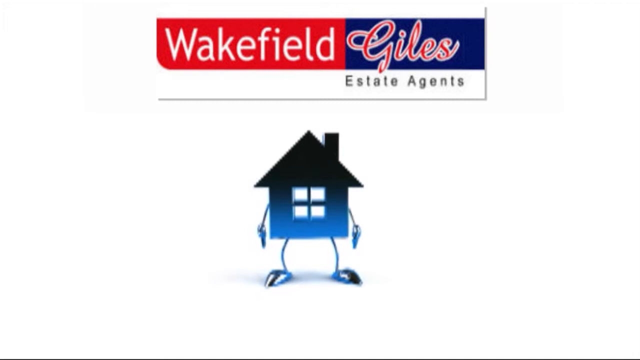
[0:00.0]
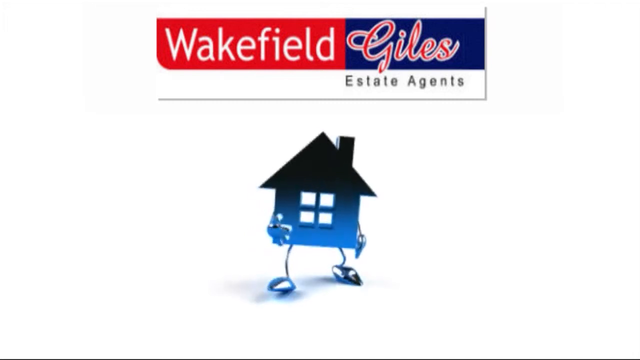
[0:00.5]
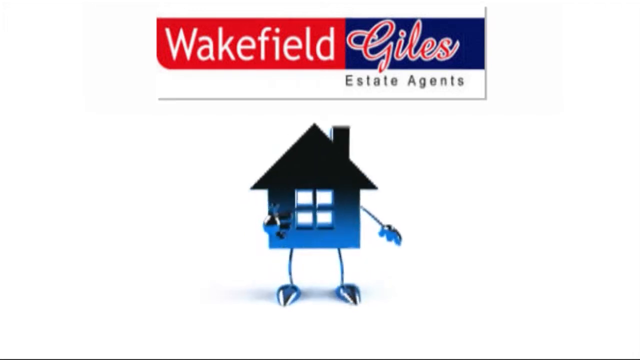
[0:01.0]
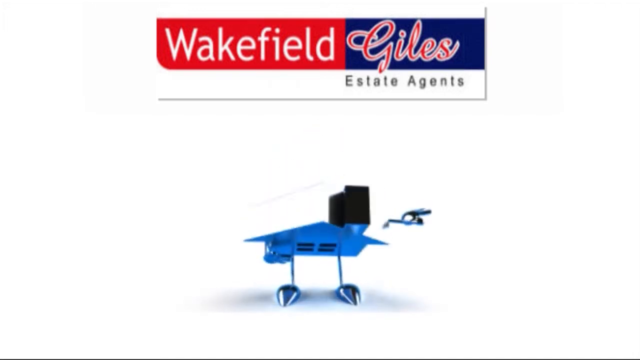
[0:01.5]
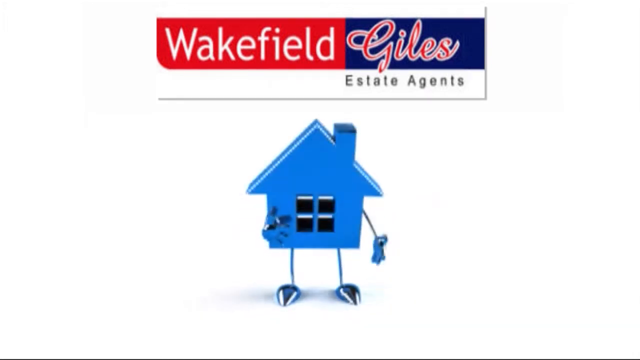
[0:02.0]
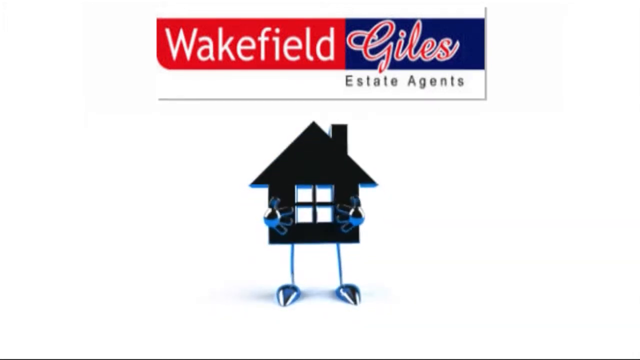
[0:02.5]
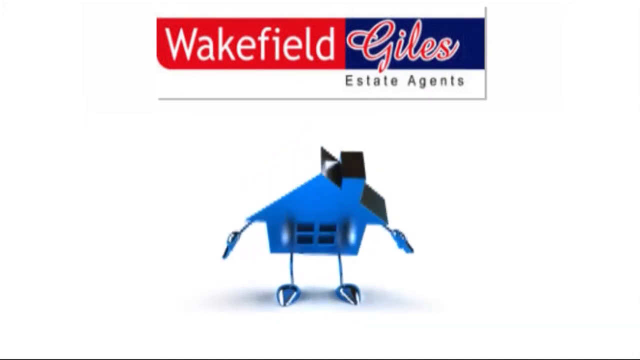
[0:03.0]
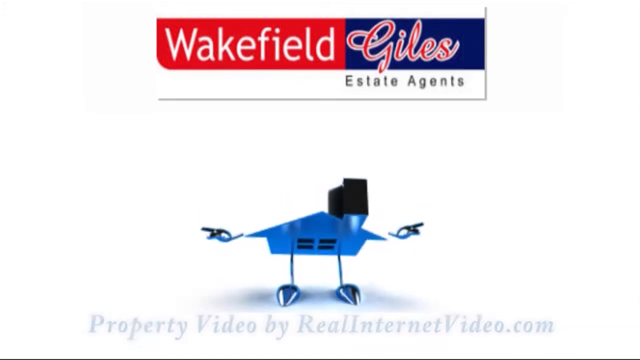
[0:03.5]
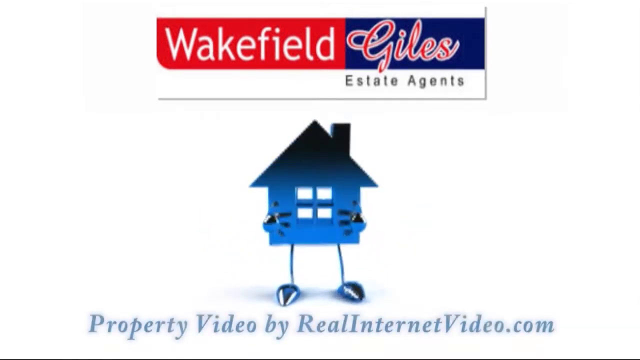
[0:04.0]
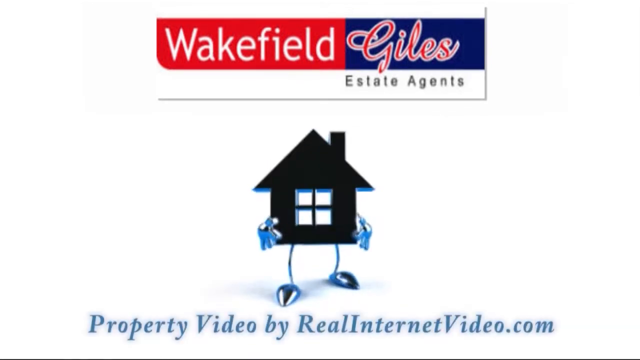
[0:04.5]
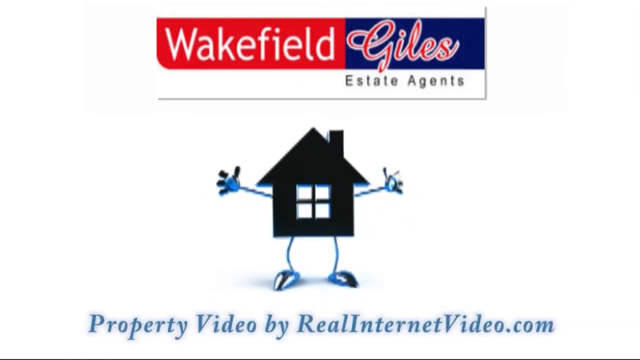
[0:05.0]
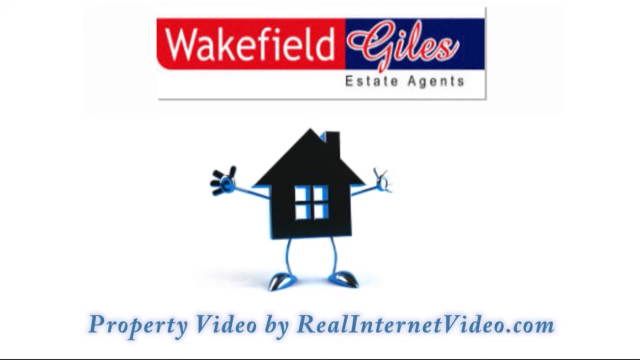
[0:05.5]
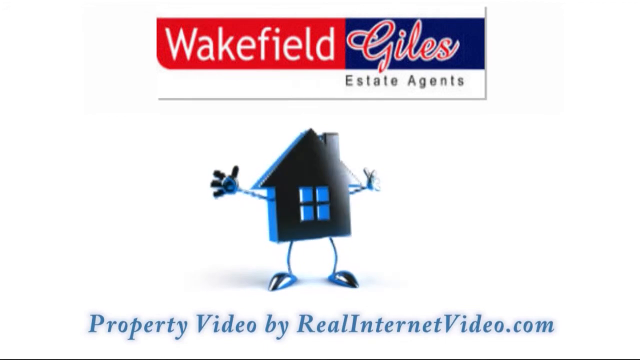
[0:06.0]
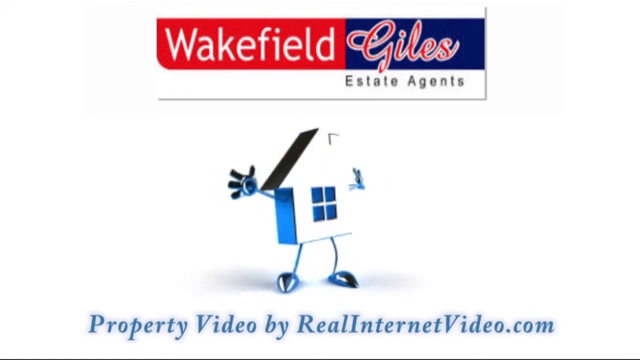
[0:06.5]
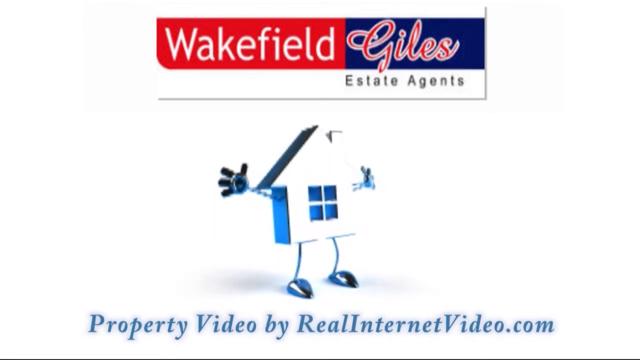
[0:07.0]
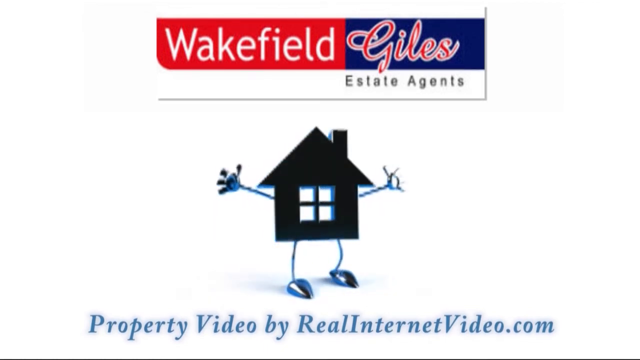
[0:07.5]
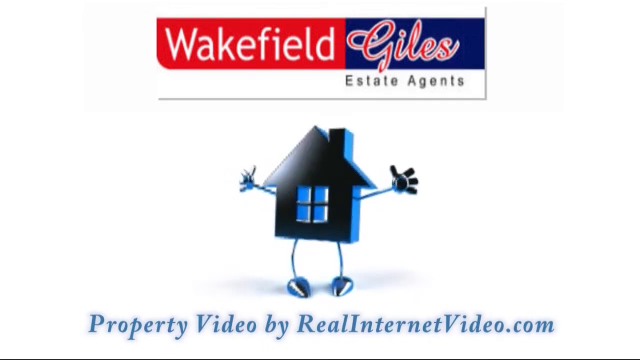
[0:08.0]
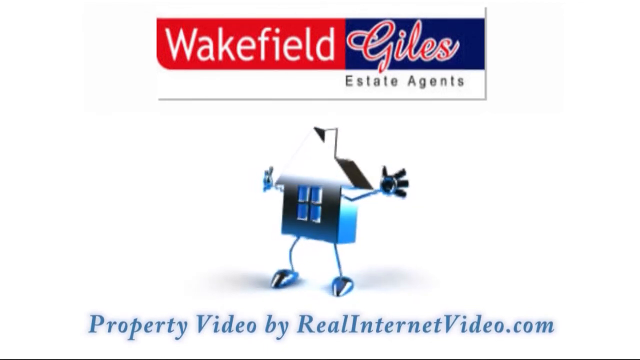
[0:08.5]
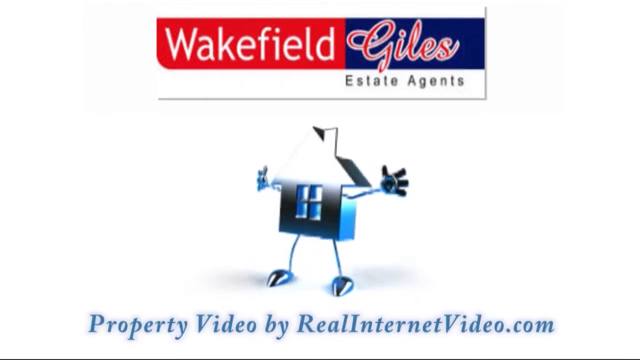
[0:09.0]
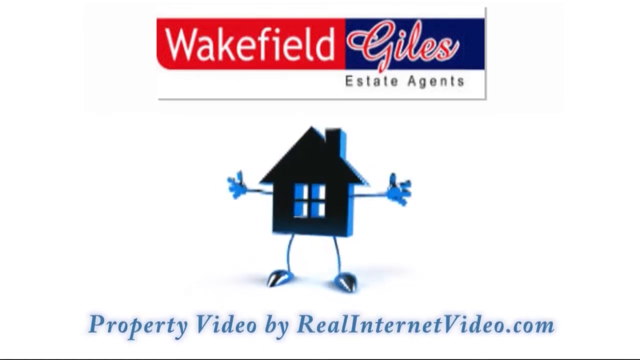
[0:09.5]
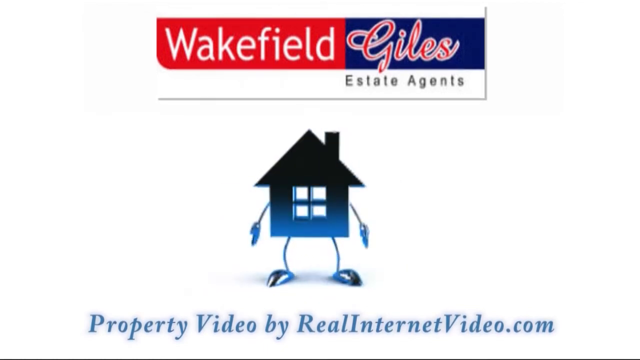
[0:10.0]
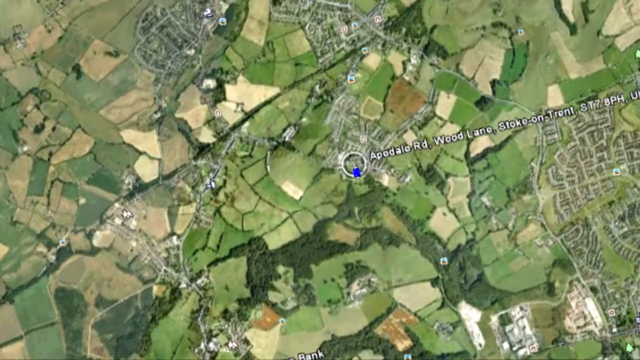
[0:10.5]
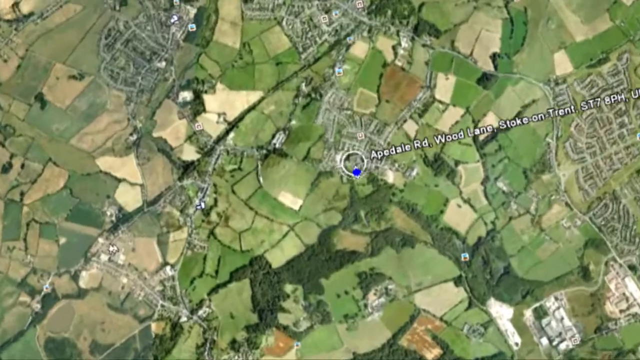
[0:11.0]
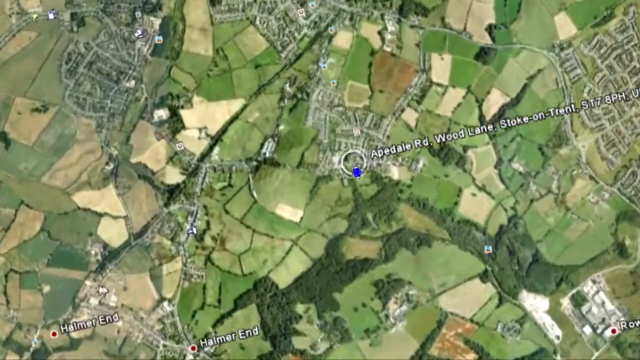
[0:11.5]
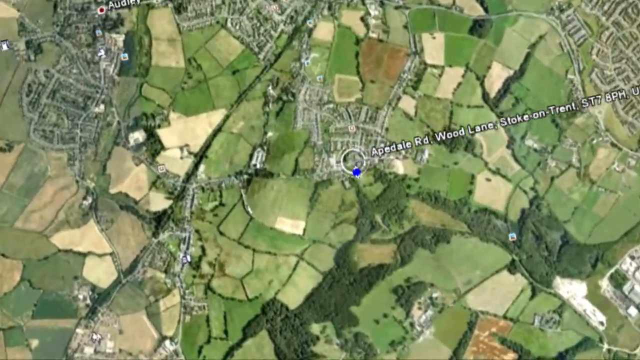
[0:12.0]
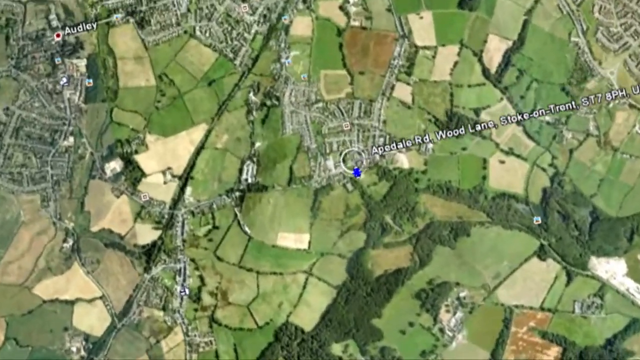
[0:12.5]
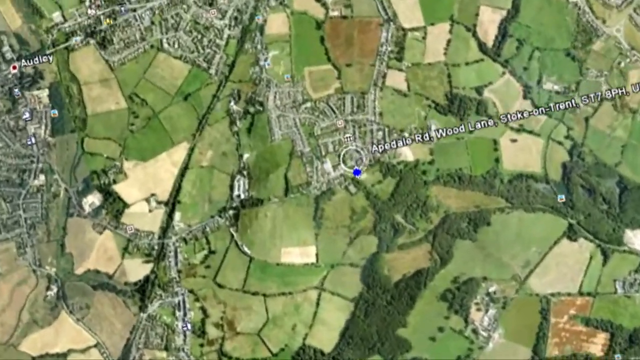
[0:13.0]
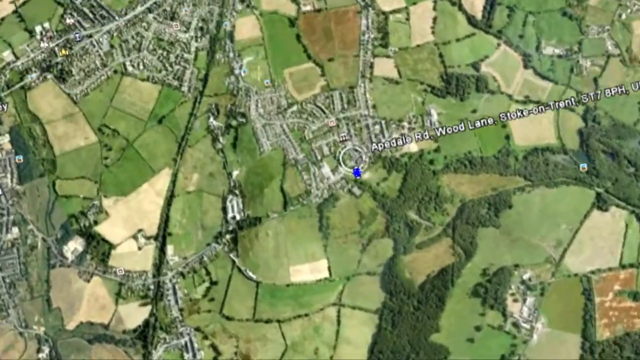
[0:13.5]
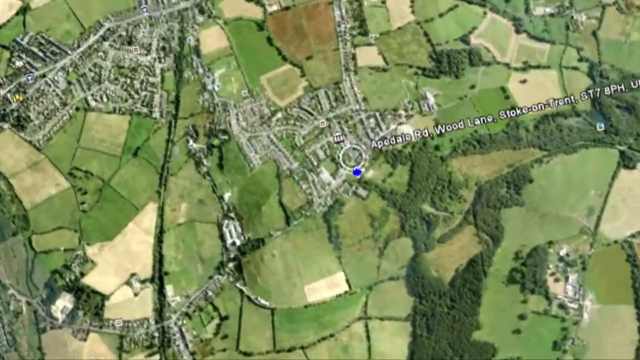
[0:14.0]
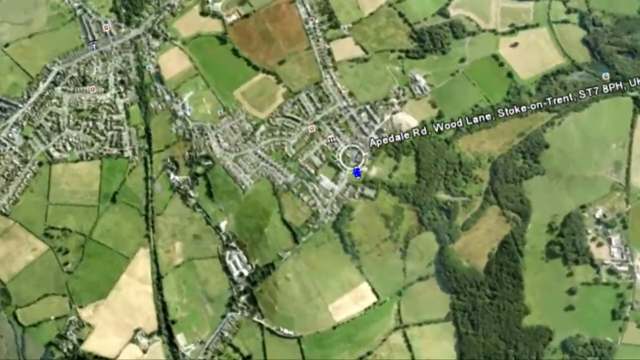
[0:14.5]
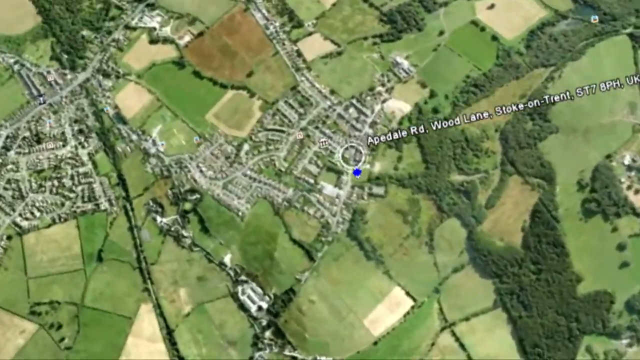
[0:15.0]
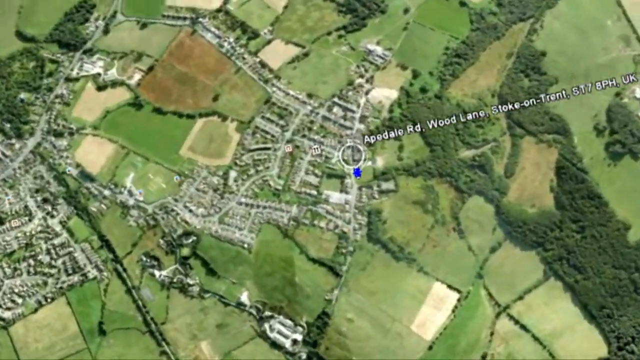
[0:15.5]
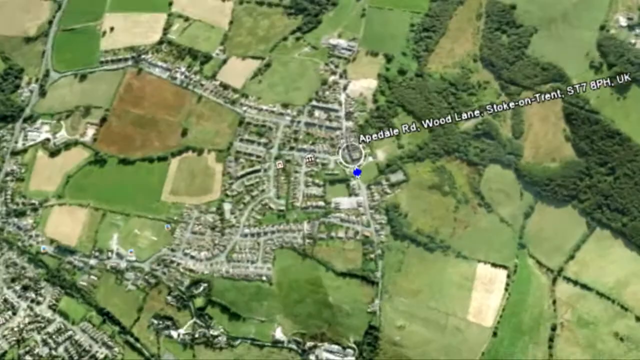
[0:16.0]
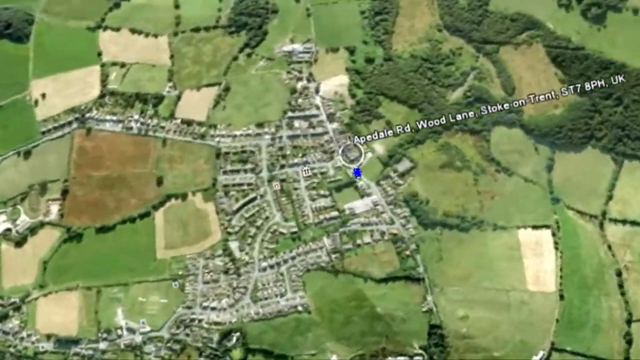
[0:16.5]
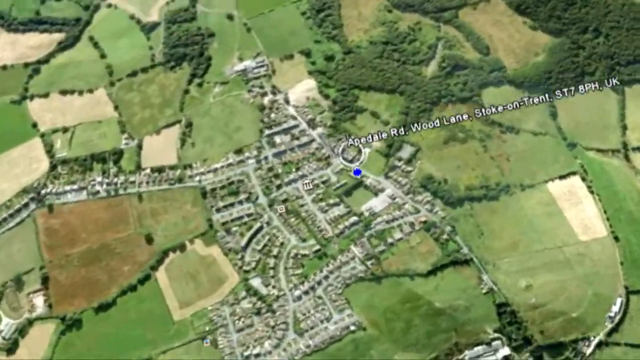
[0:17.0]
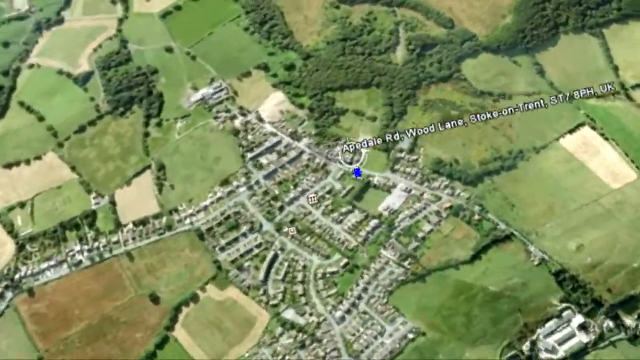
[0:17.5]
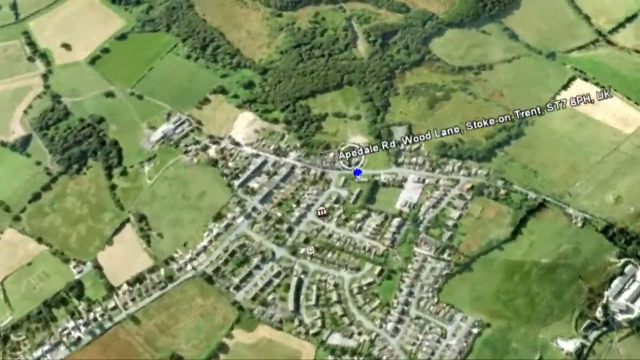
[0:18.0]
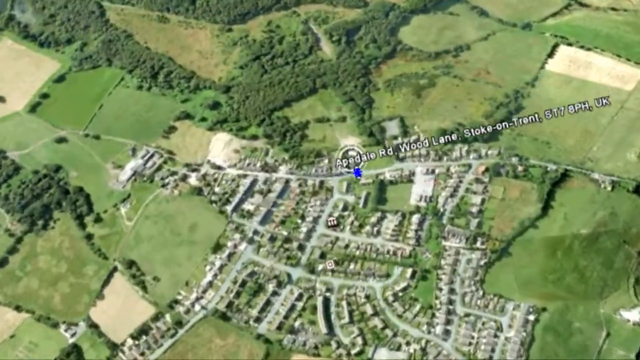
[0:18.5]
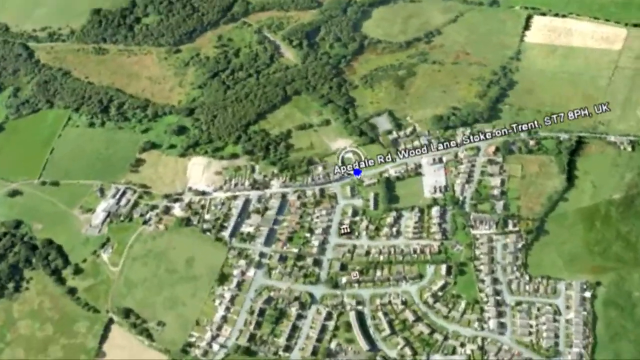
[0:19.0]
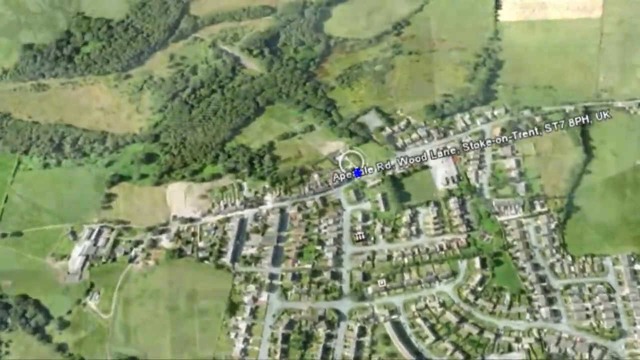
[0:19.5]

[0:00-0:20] The video is presented by Wakefield Giles Estate Agents. Their logo is a simple little house with a chimney and four windows made into one, with a set of arms bending back and forth. An aerial sky view shows Apedale Road, Wood Lane, Stoke-on-Trent, looking down from above into a mapped area. Text reading "property video by" also appears, followed by a word that is hard to read. The little house in the logo now has arms and legs and holds its arms out, almost as if hugging. As the sky view goes down, Apedale becomes visible, and the view goes further each time. The house's hands have little gloves and its legs have little shoes.